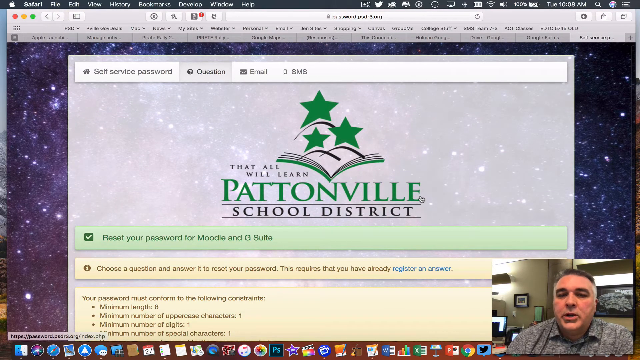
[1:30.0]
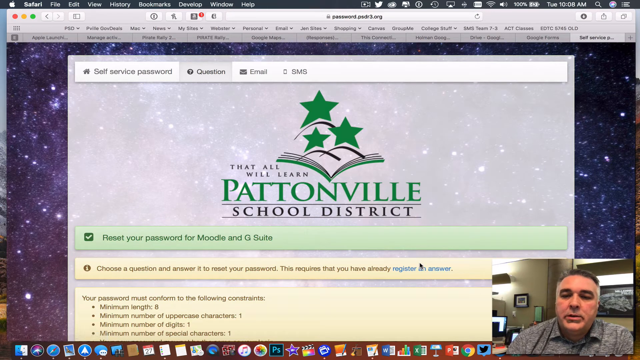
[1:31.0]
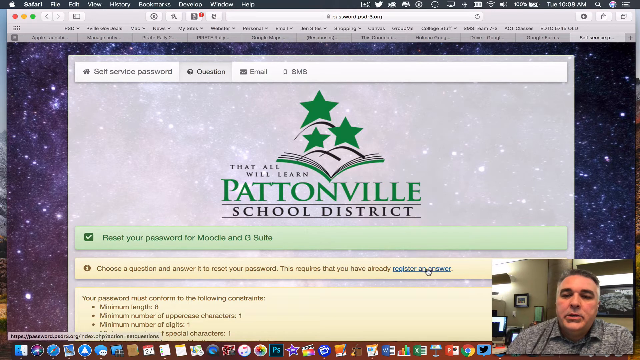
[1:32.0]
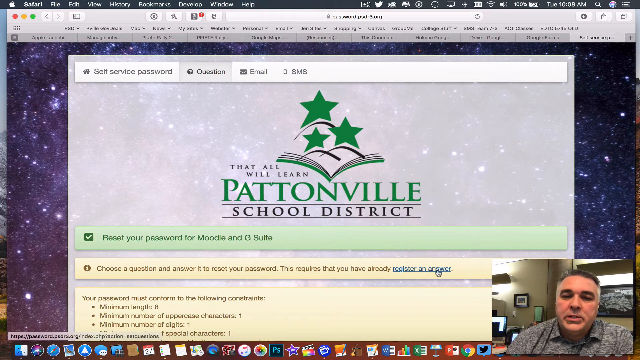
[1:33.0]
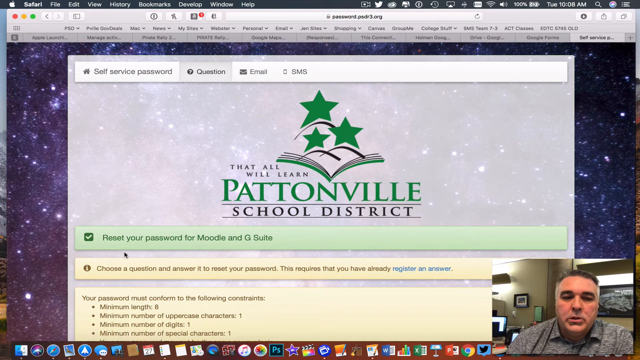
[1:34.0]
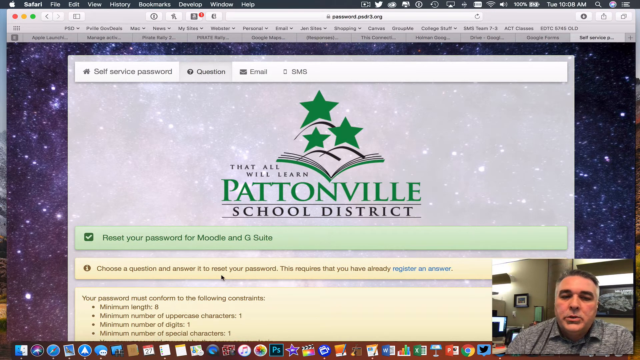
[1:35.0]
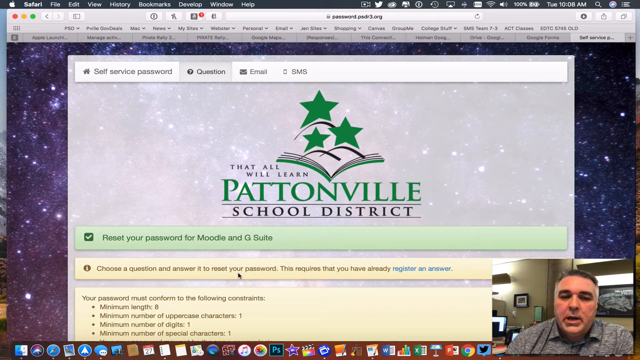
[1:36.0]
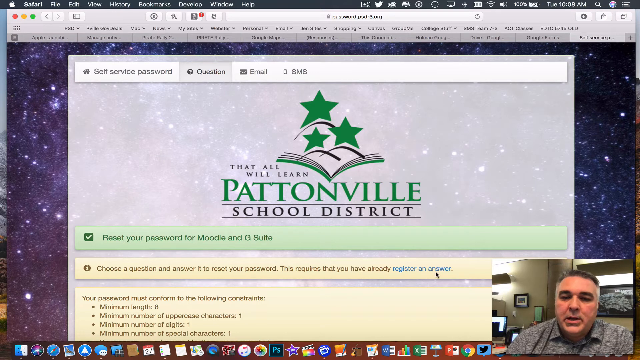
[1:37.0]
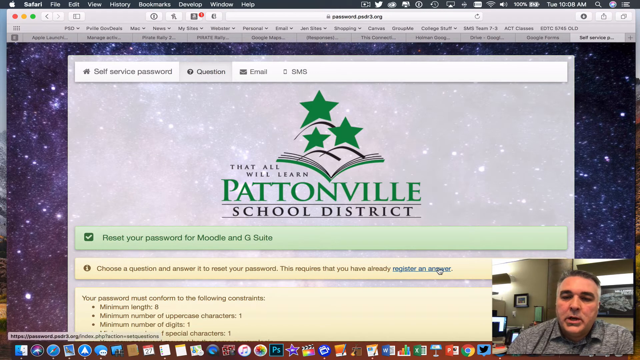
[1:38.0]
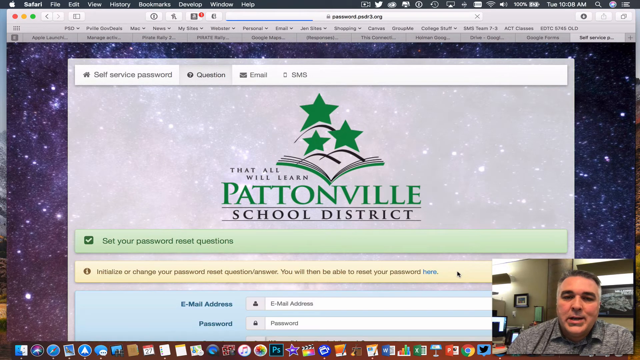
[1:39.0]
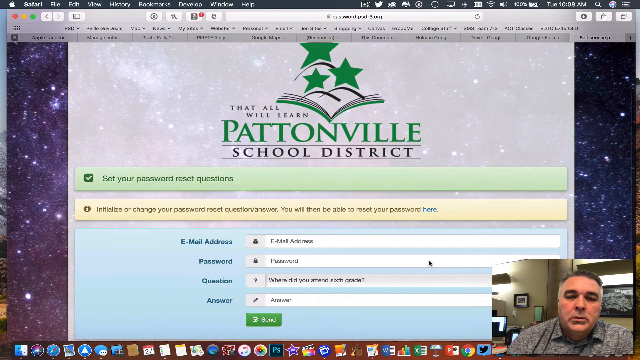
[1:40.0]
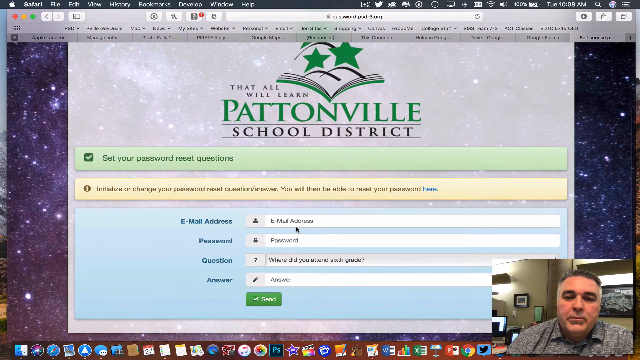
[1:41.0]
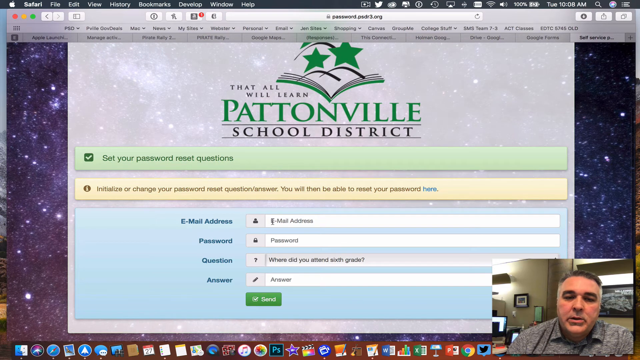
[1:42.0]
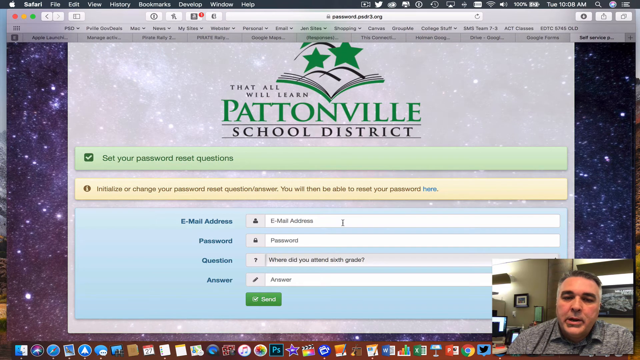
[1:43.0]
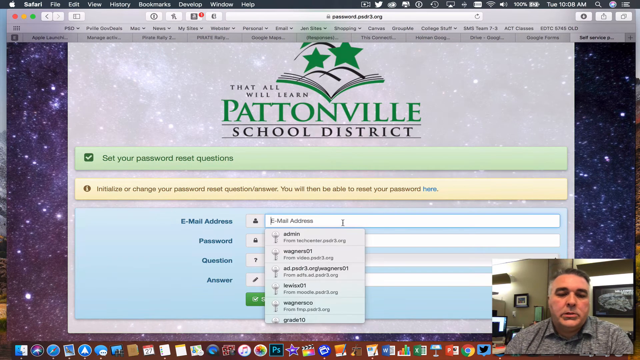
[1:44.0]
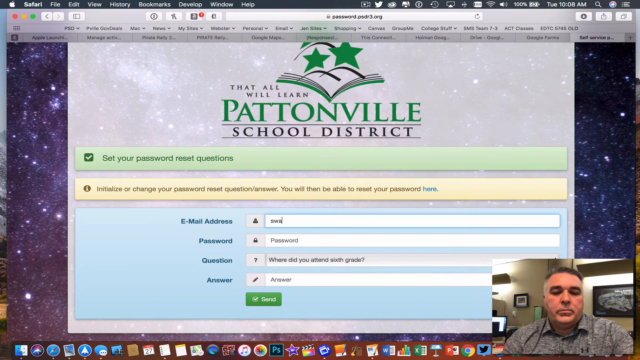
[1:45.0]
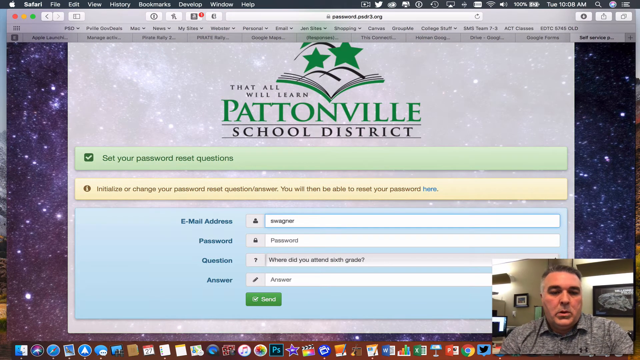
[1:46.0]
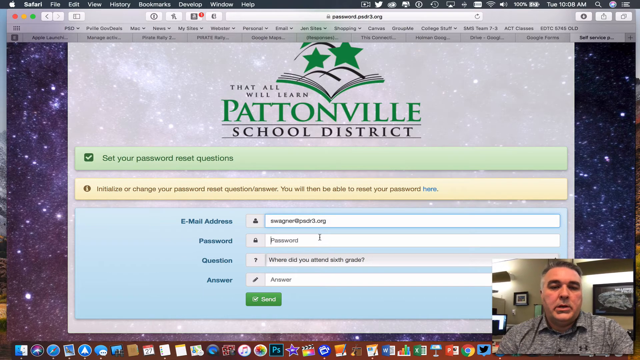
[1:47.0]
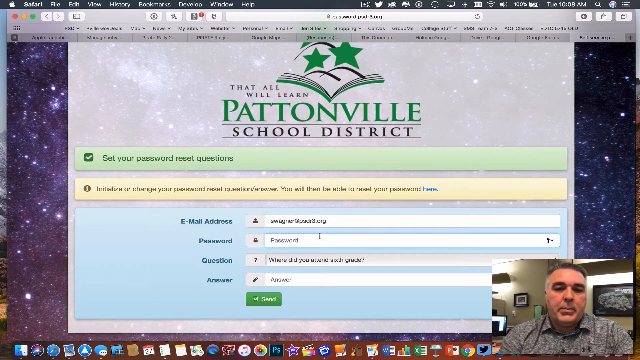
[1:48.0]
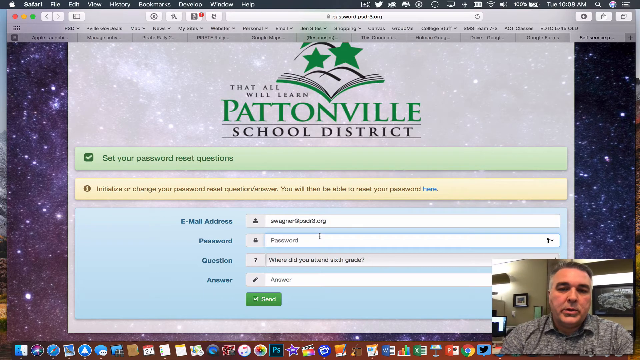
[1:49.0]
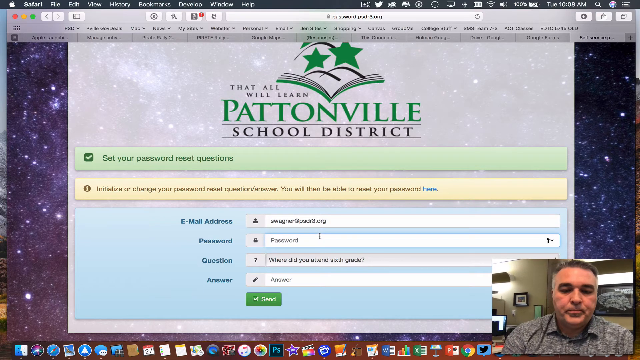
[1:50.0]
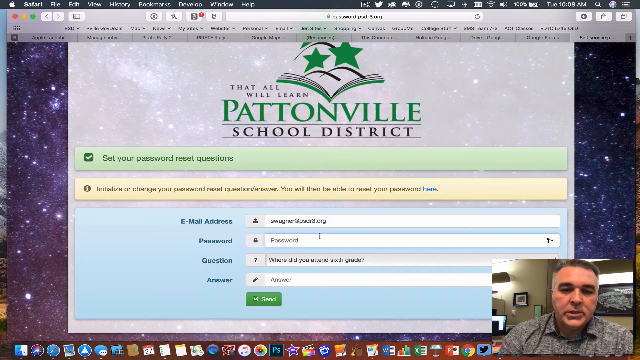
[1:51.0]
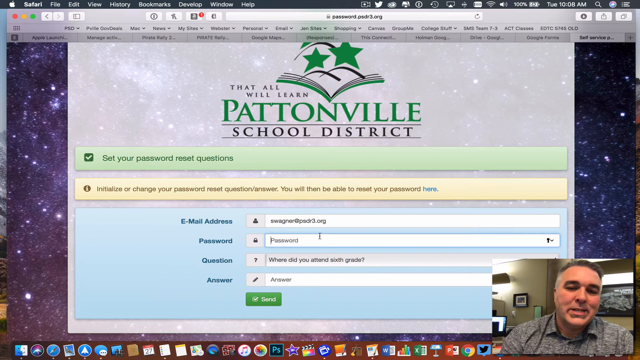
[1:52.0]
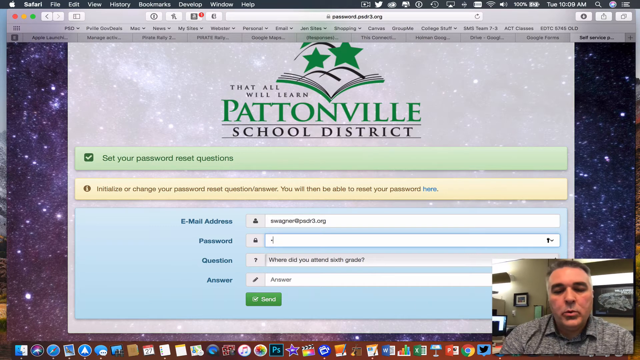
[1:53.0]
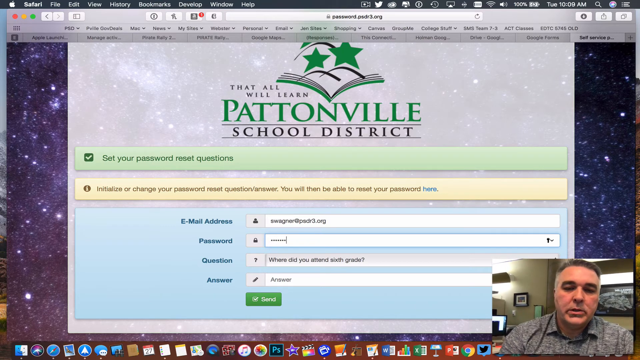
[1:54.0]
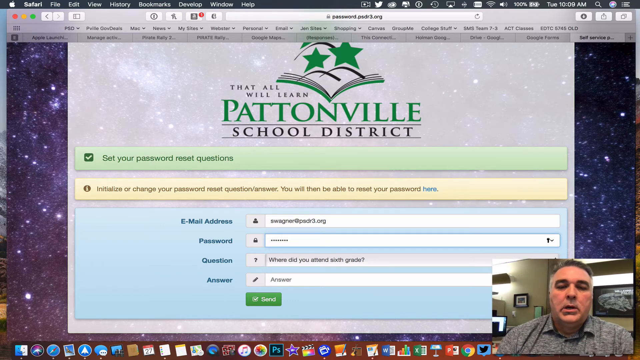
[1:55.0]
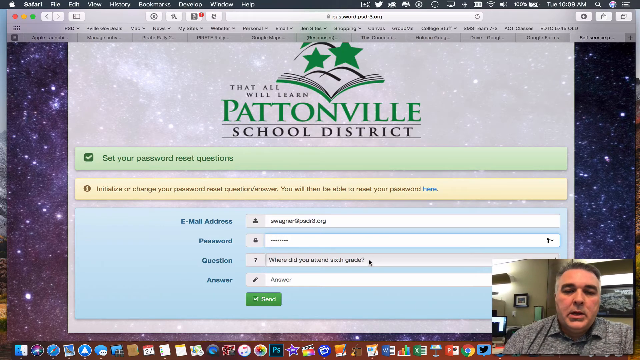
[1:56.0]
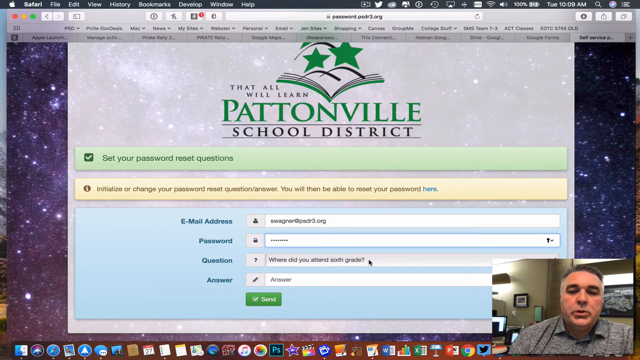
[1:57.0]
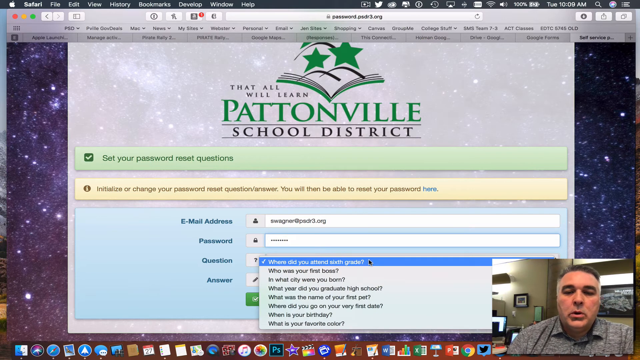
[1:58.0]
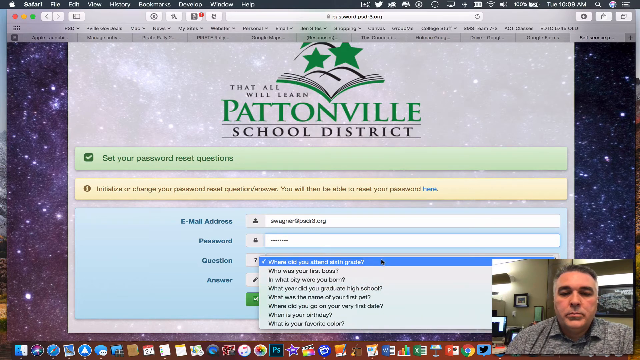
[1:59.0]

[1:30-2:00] At the top left of the screen is the text "self-service password." The question option is still selected and has a gray background. Next to it is an envelope icon labeled "email," and next to that what is probably a cell phone icon labeled "SMS." The man moves his mouse around text about choosing a question and answering it to reset the password, which includes "This requires that you have already registered an answer," with the last three words in blue. He keeps moving the mouse back and forth, then scrolls down to the email area and types in an email address that looks like it ends in ".org." The typed password appears as a row of circles. He then clicks on a list of questions.